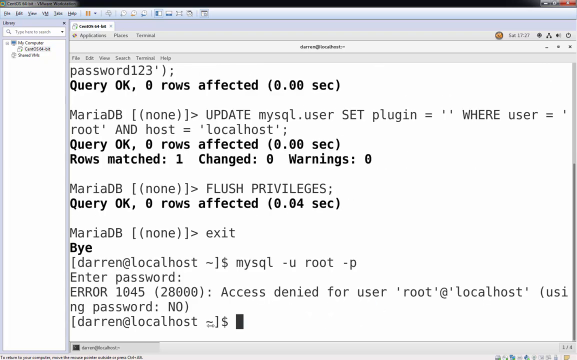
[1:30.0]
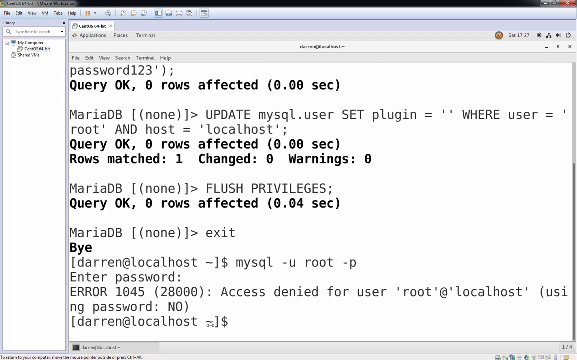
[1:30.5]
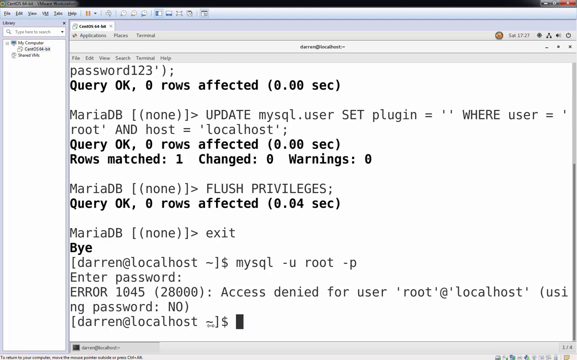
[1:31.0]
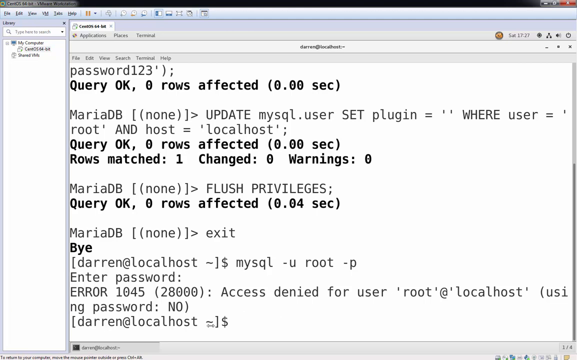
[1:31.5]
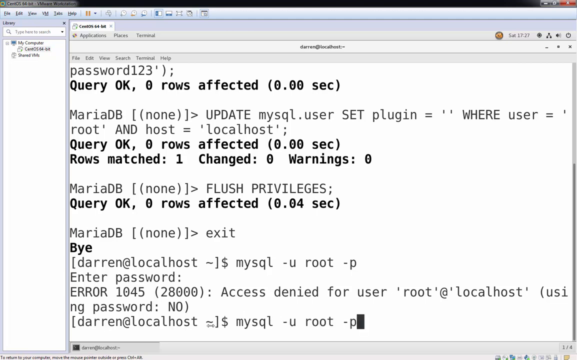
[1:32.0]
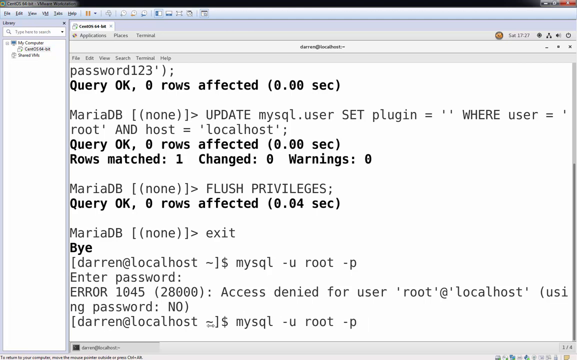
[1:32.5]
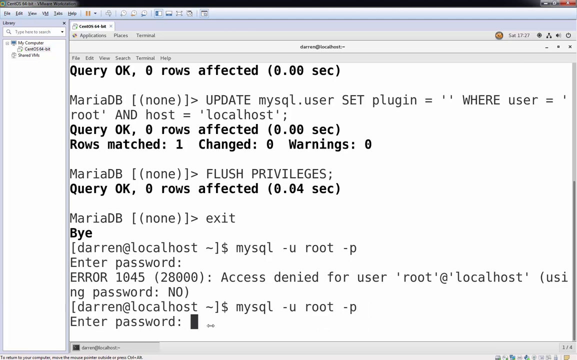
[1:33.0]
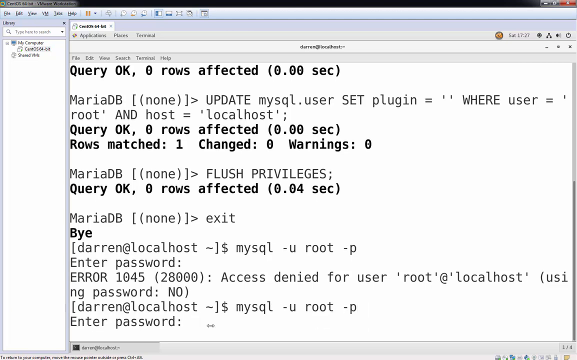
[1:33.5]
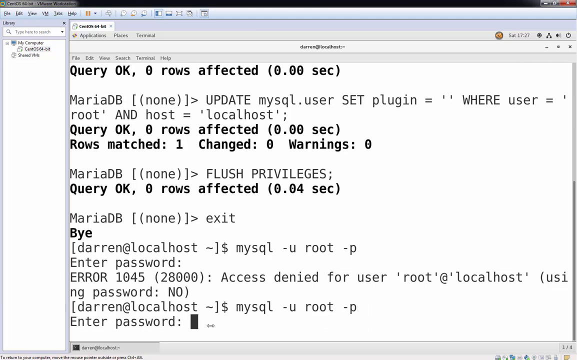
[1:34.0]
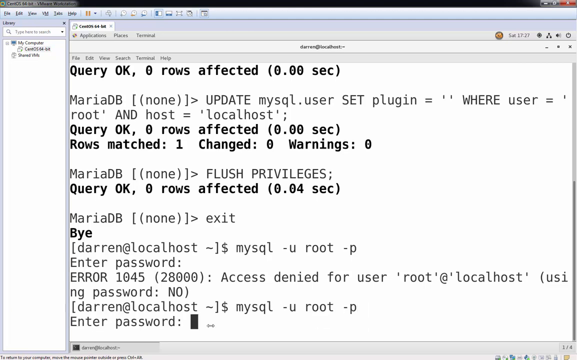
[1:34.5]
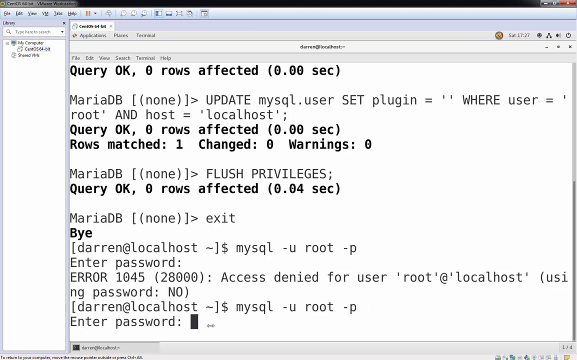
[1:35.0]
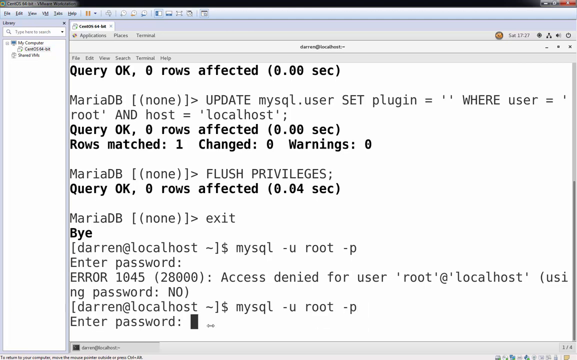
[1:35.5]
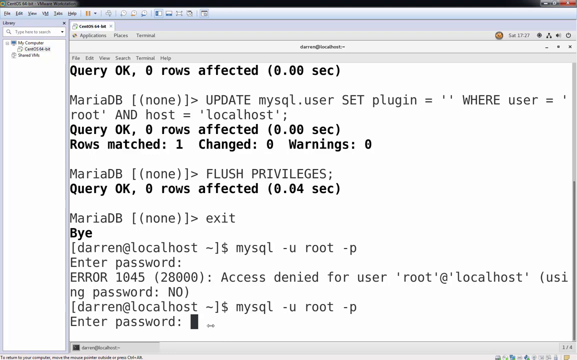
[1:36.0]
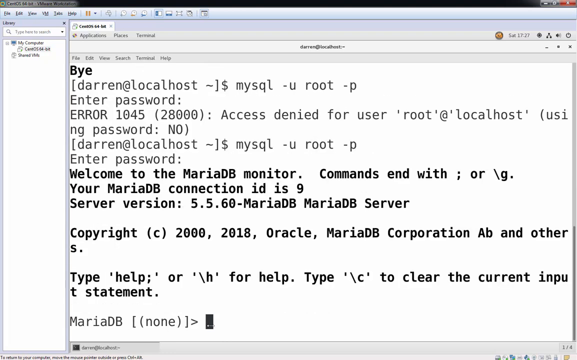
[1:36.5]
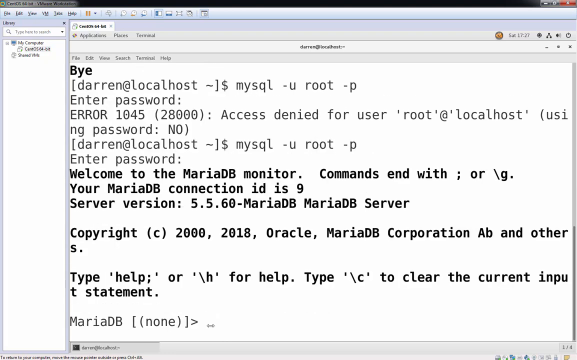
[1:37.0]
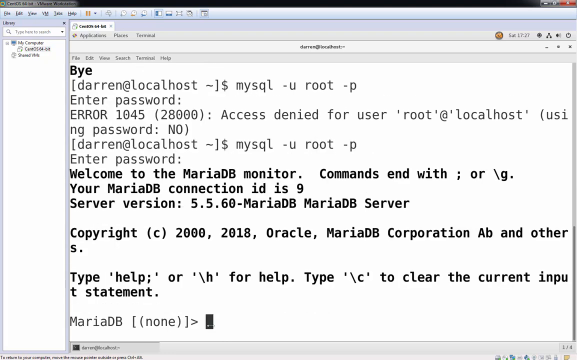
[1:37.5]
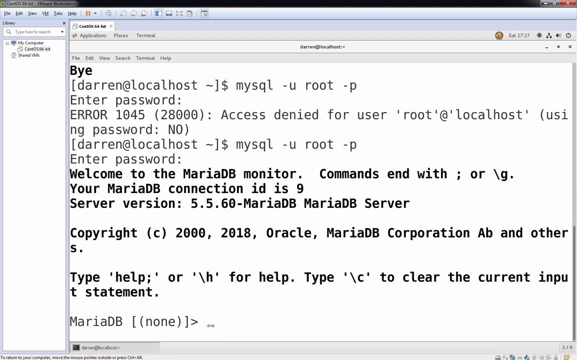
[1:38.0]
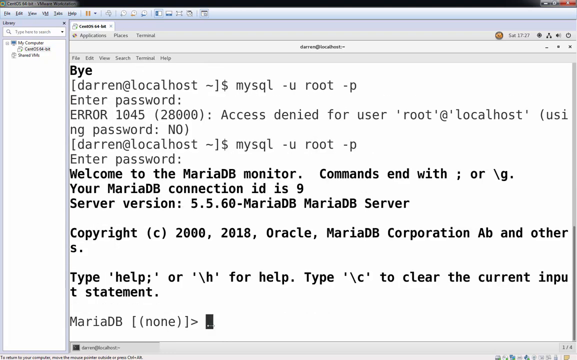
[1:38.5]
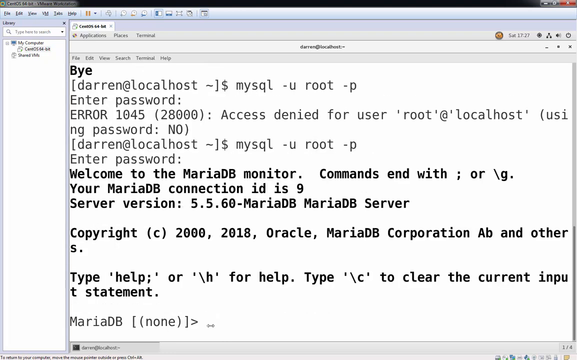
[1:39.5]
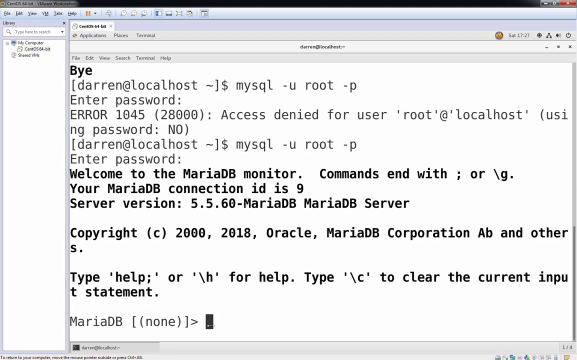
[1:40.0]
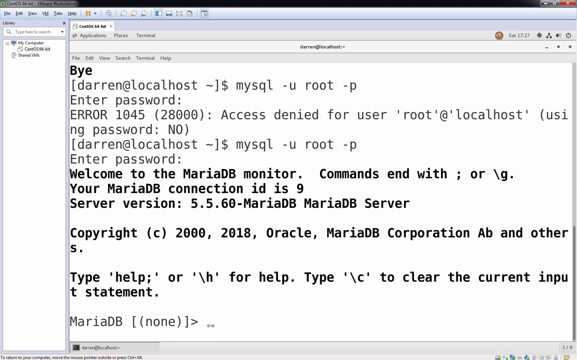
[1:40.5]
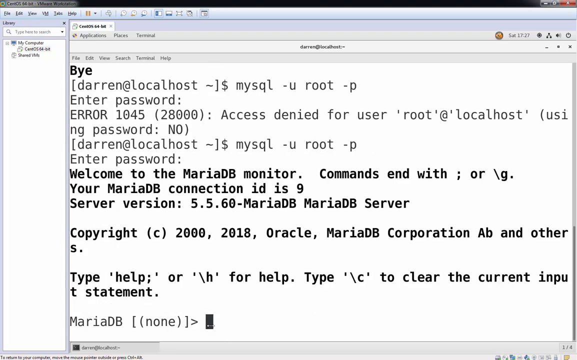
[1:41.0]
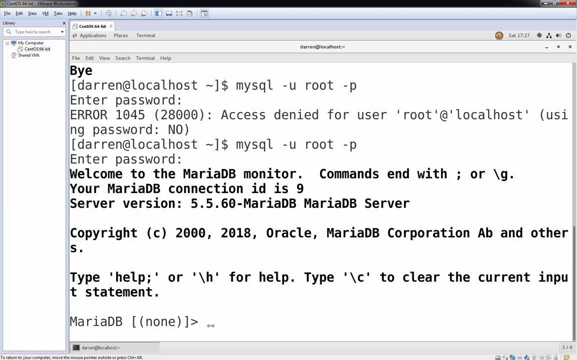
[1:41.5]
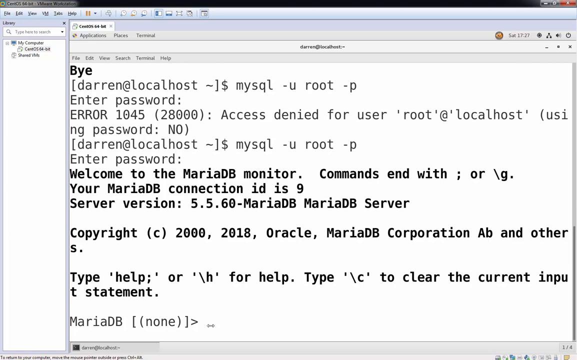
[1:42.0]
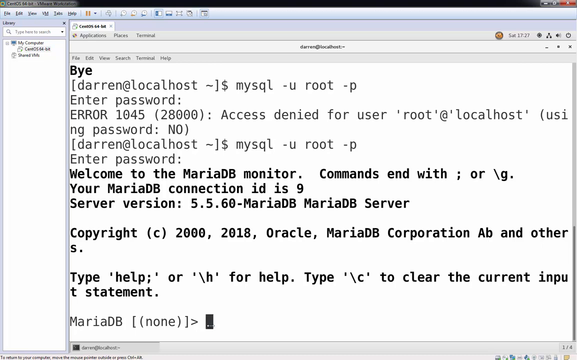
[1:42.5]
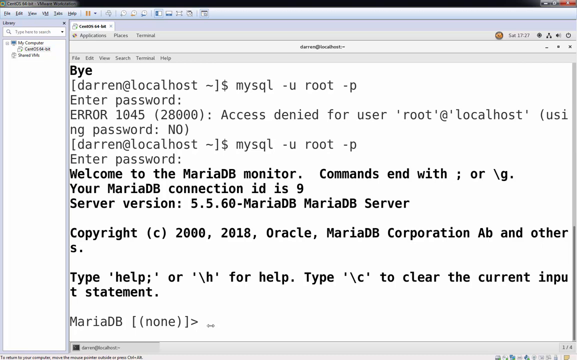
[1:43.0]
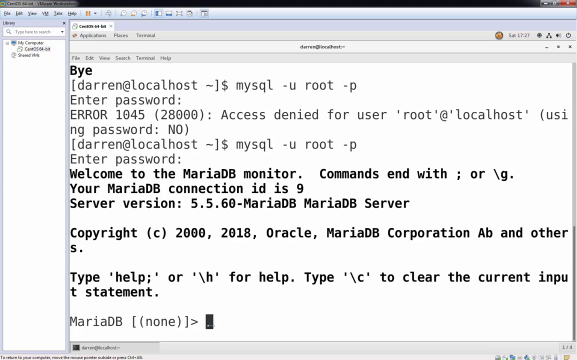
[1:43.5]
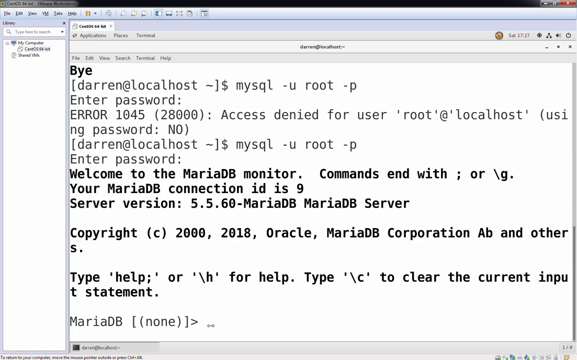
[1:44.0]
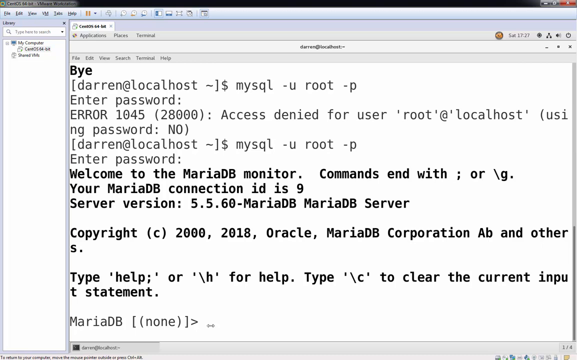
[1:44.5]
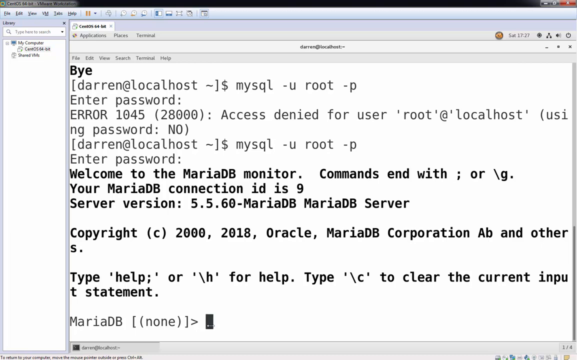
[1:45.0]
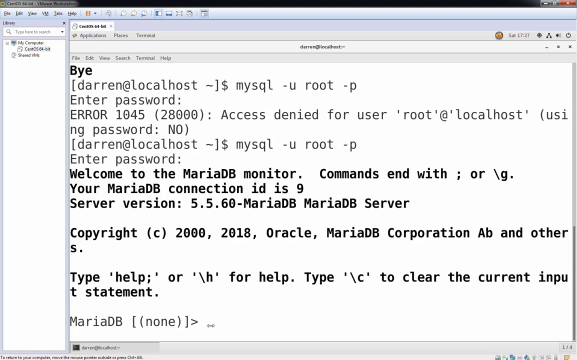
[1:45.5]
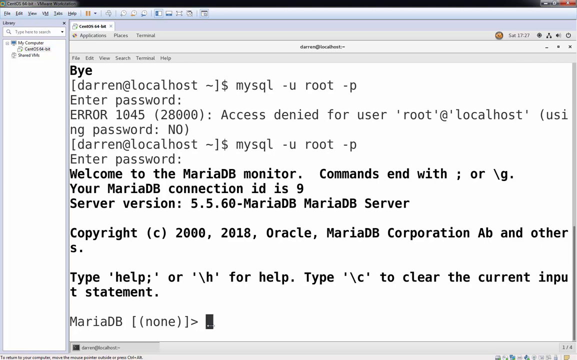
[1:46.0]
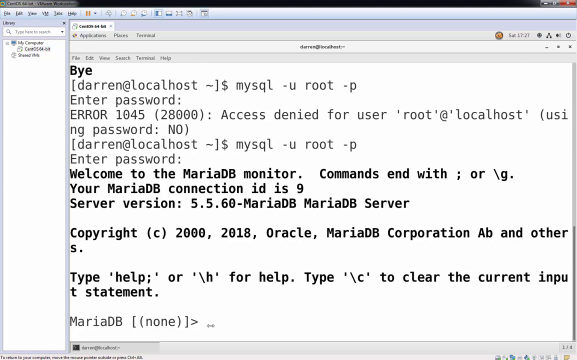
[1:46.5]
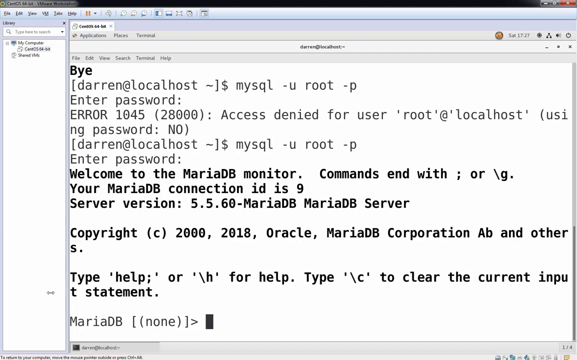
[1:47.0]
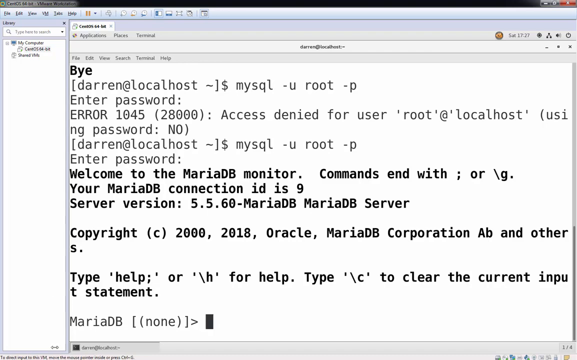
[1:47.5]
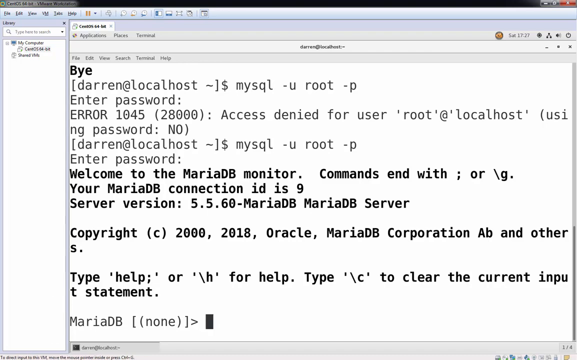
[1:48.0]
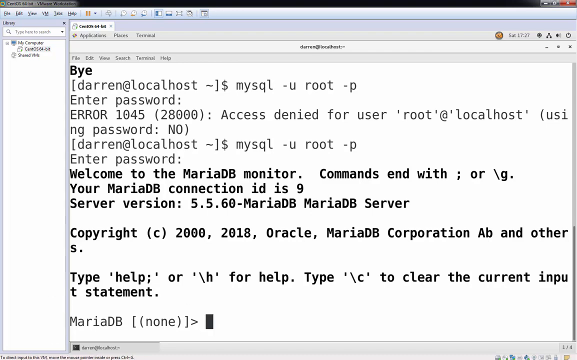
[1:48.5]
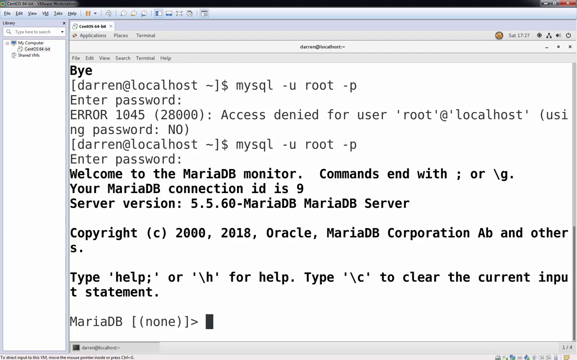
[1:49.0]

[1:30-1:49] Continuing from the "Darren at localhost" prompt in brackets with the dollar sign, another "mysql -u root -p" is typed, followed by "enter password". What looks like an error then appears, reading "error 1045 (28000)" and "access denied for user root at local host using password: no". The "welcome to the MariaDB monitor" text seen earlier pops up, ending with the same "MariaDB" prompt with "none" in brackets and parentheses and the blinking rectangle. The mouse cursor, shaped like two connected arrows pointing left and right, moves around some; this is the cursor that usually moves around in the video.